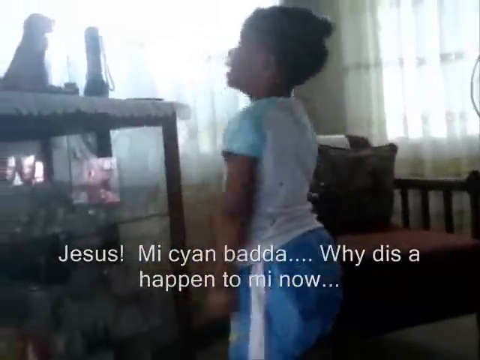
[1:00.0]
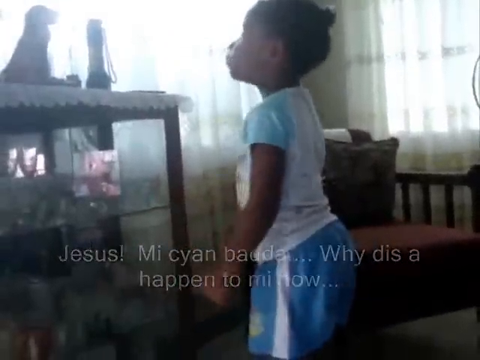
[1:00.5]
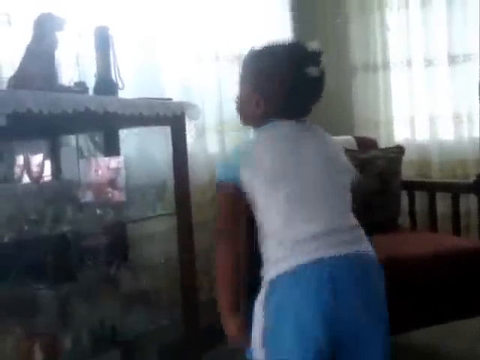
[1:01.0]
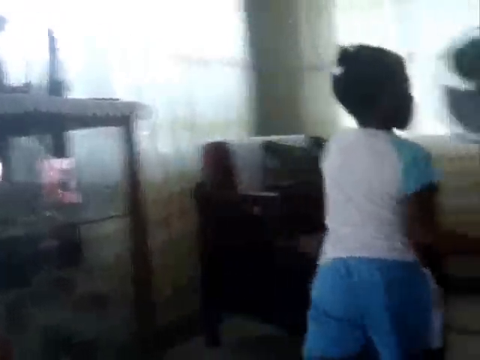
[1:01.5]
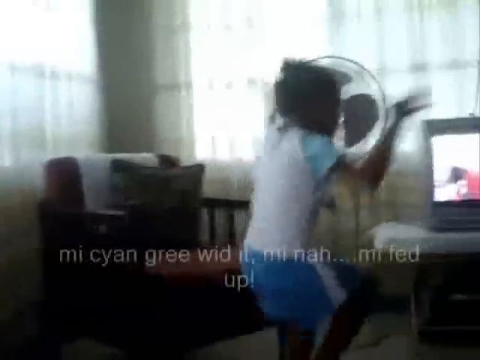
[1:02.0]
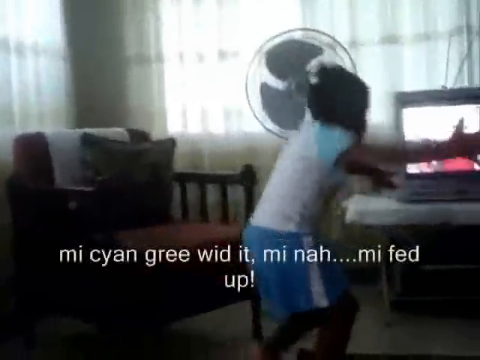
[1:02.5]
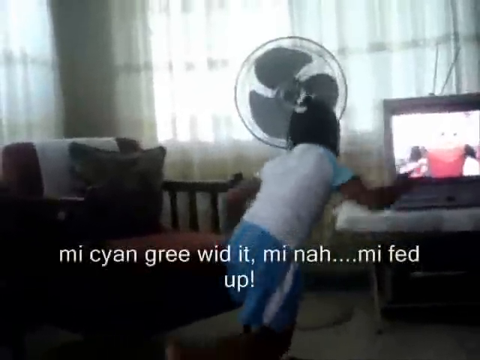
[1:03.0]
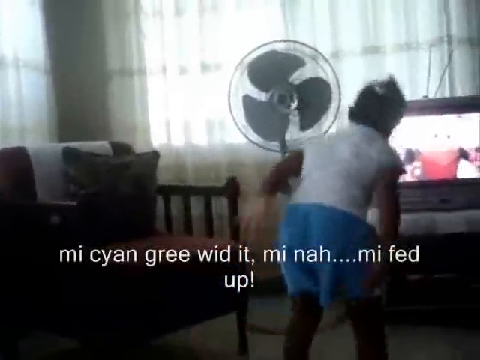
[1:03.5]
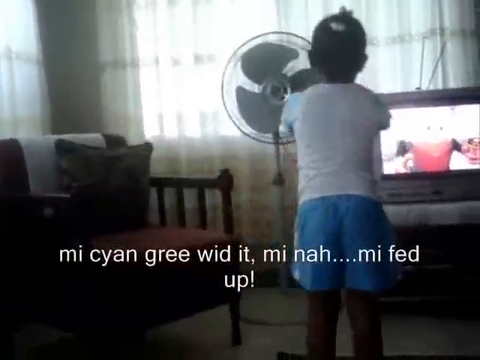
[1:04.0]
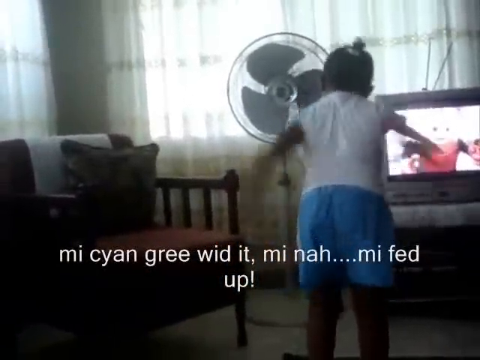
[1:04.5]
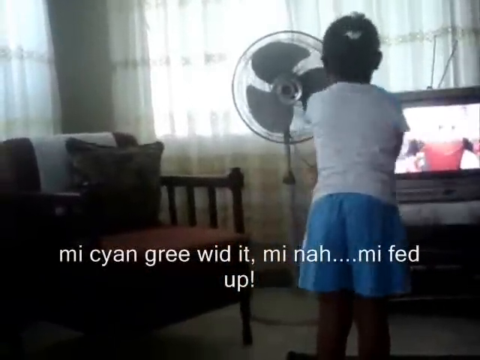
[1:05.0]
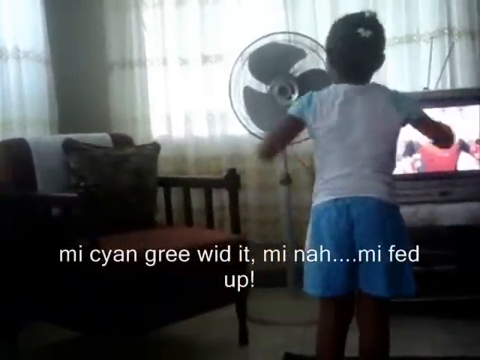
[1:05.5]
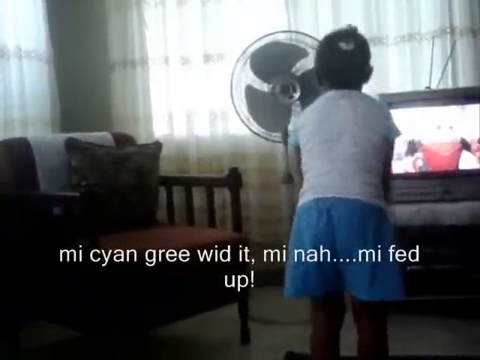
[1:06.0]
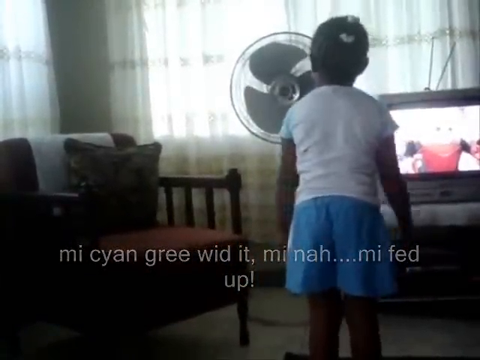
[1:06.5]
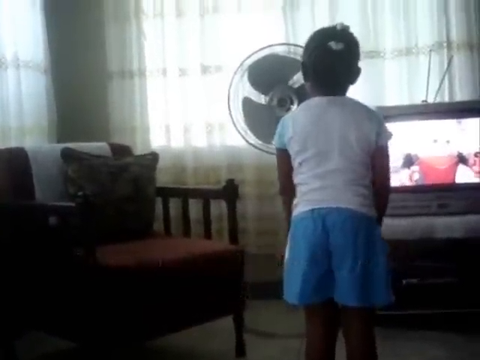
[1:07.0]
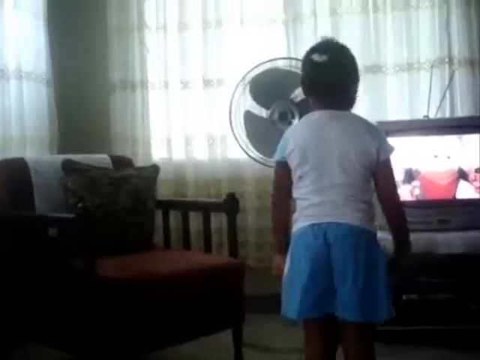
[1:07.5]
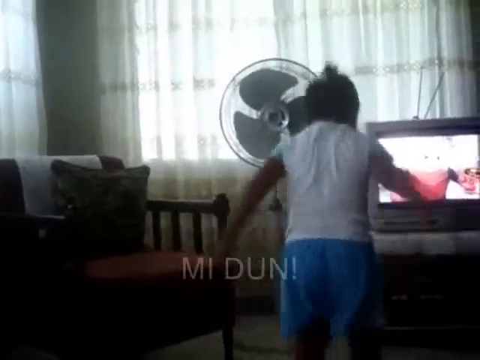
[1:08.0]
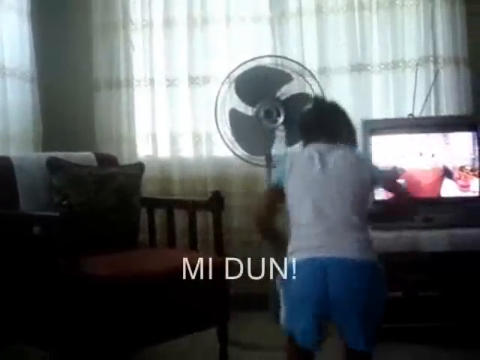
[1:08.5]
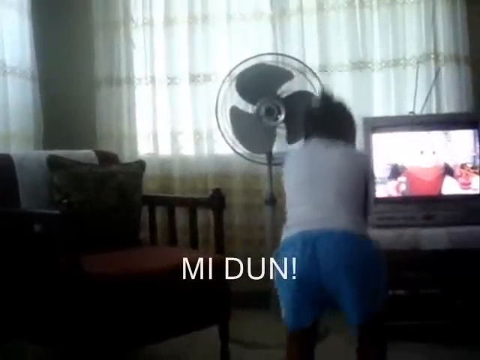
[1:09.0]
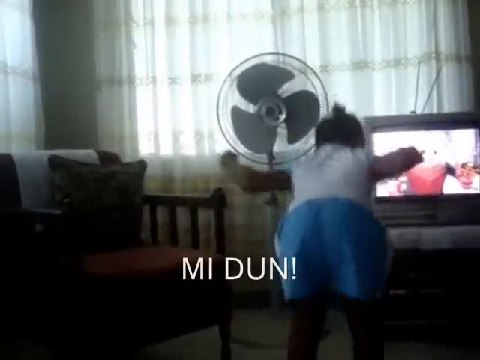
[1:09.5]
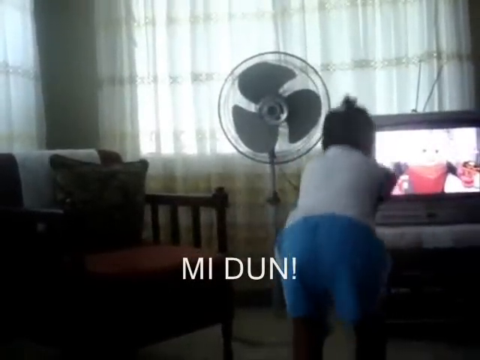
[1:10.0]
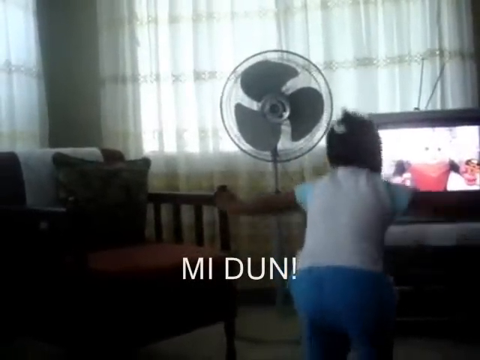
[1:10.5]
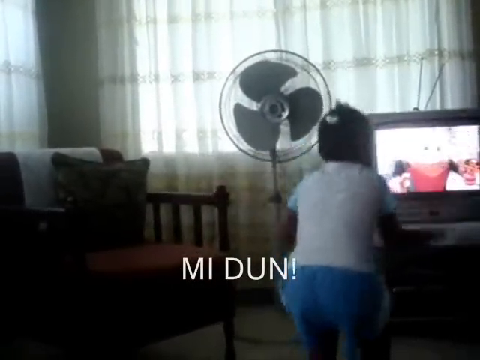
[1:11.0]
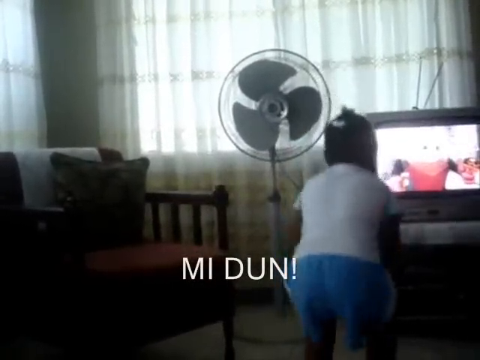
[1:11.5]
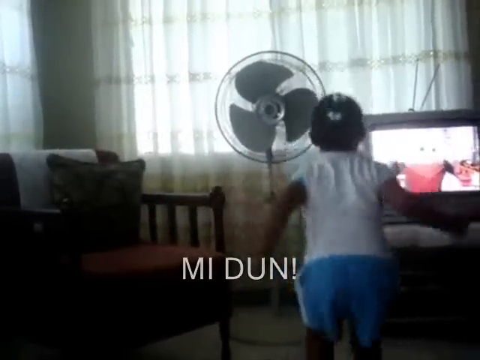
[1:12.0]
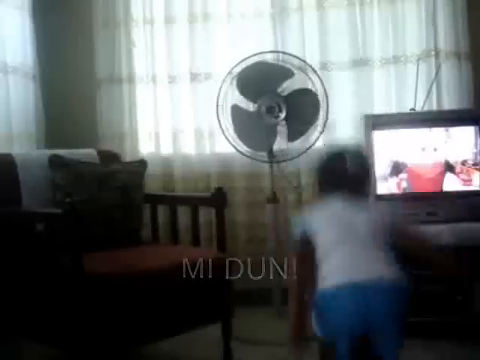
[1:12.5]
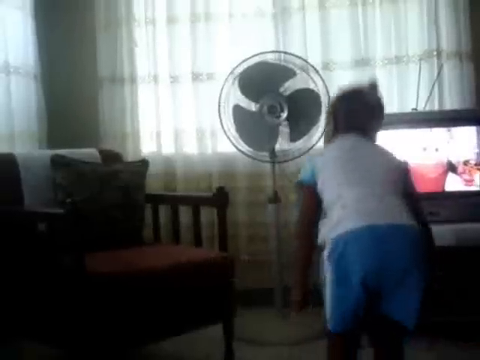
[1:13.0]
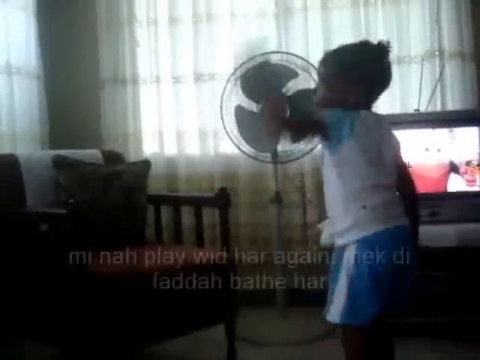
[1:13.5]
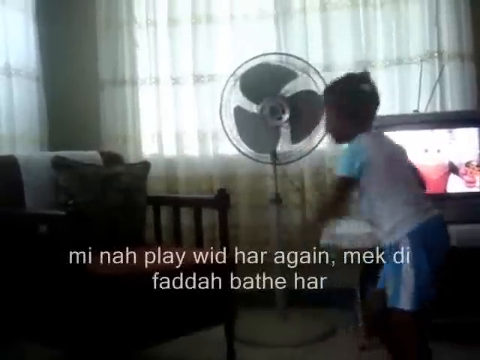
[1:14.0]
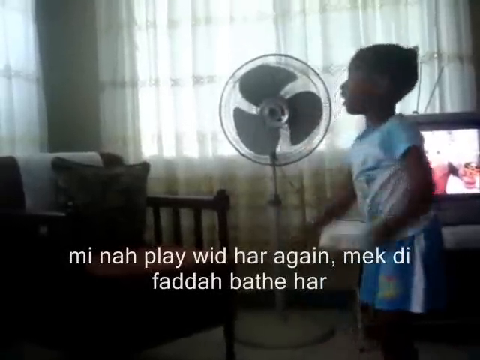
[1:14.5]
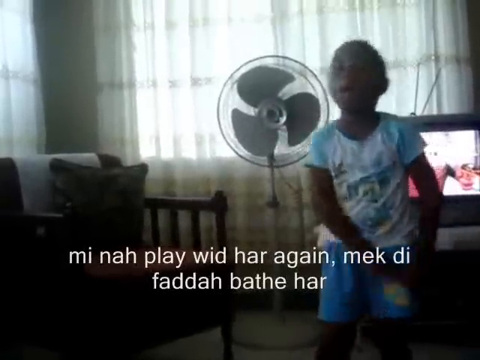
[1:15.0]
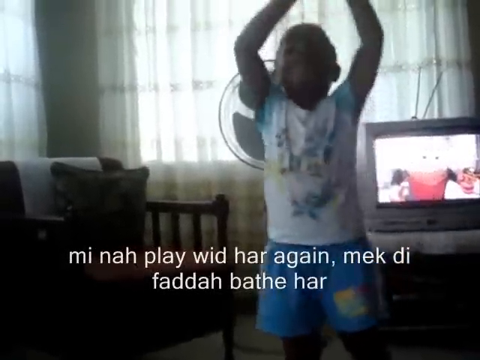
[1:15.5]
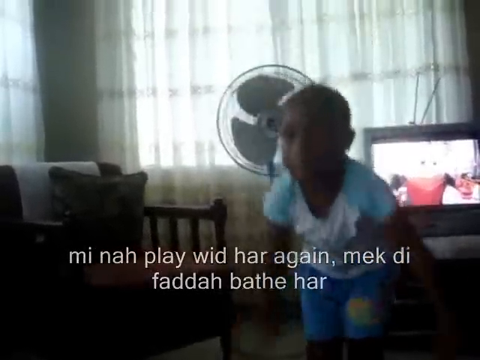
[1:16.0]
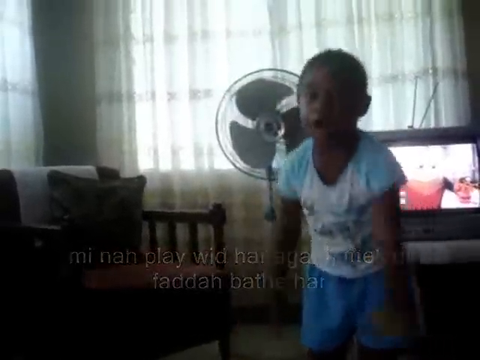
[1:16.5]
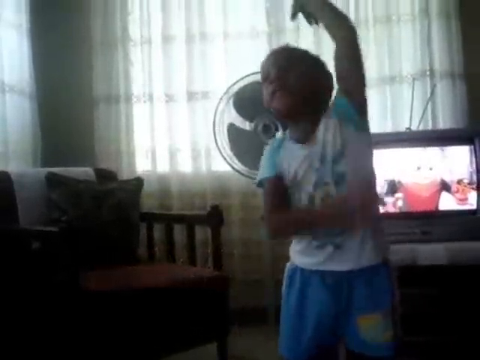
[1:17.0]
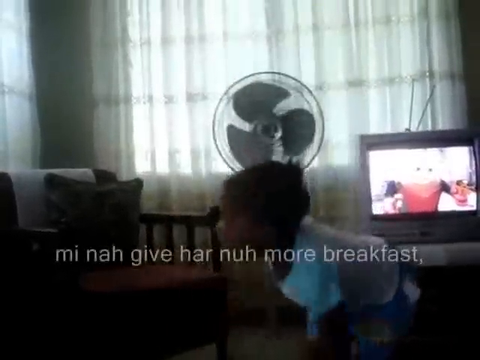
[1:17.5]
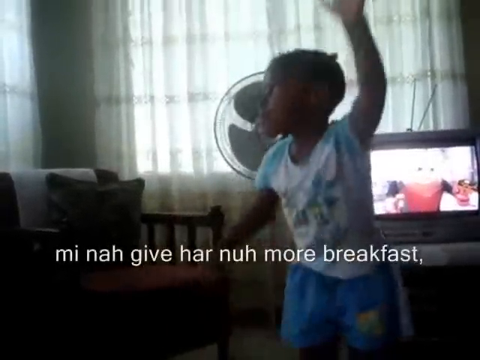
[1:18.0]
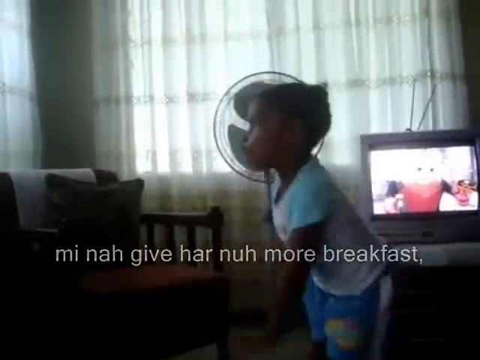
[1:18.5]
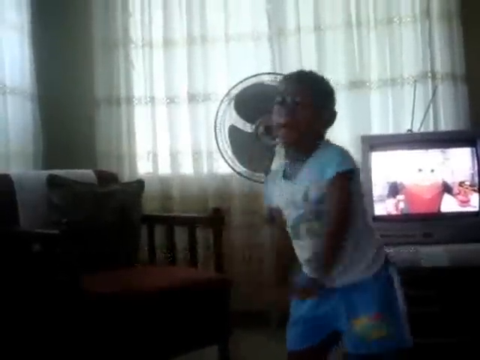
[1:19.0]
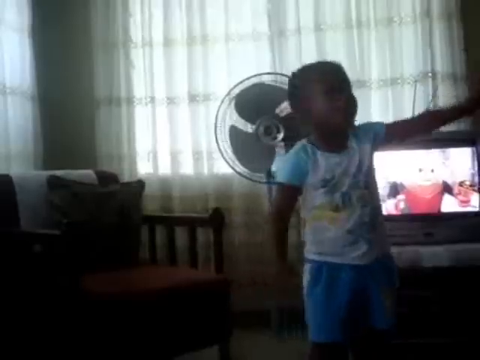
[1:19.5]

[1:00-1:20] Subtitles in broken English mixed with another language or slang appear at the bottom of the screen as the young girl moves around frantically, repeatedly moving both arms up and down. She also jumps up and down, her mouth opening wildly as she speaks. The way her mouth opens so wide makes it appear that she is yelling and upset.